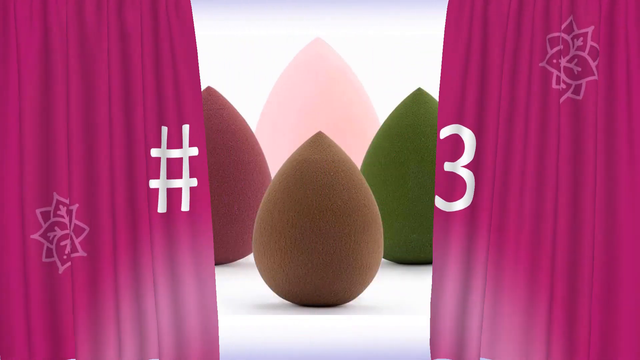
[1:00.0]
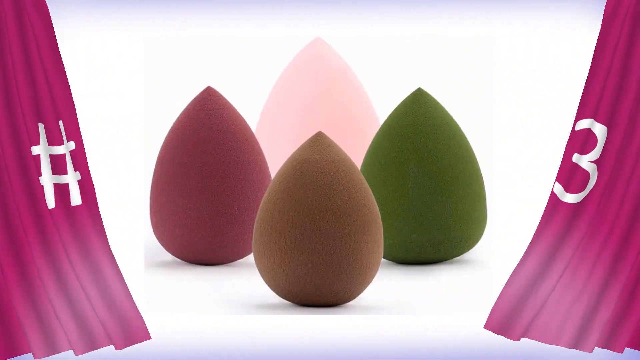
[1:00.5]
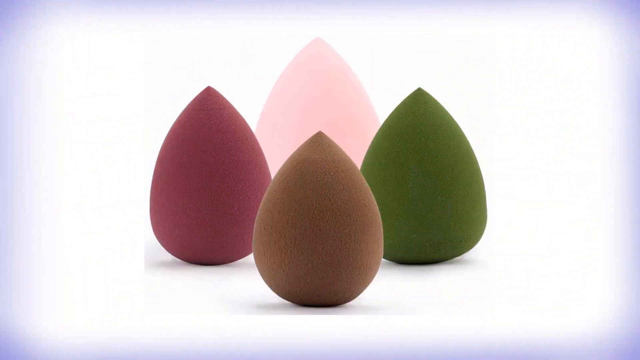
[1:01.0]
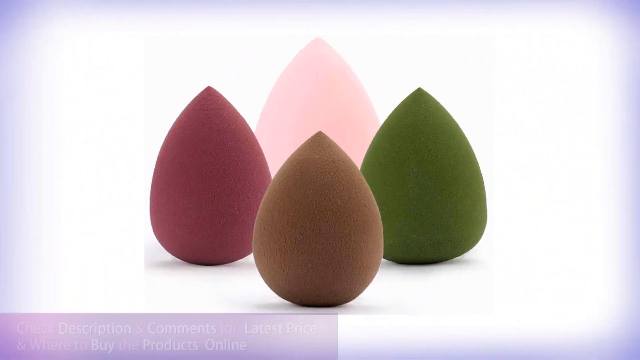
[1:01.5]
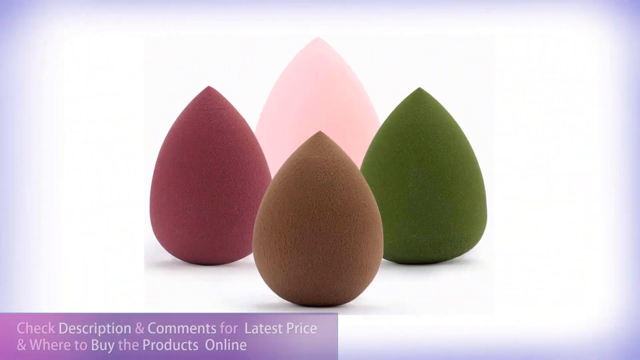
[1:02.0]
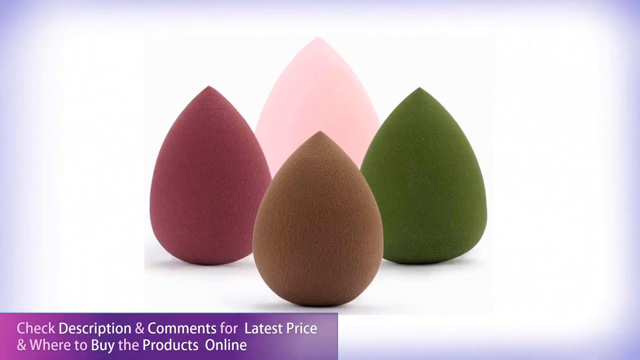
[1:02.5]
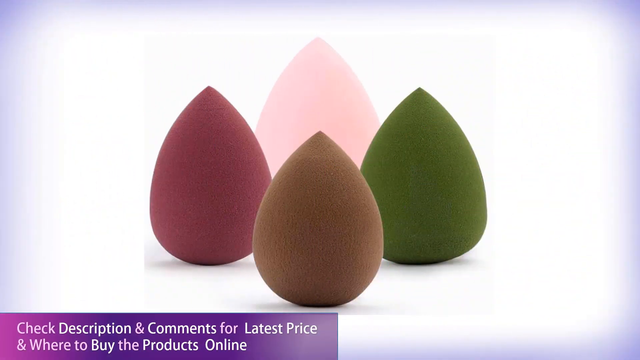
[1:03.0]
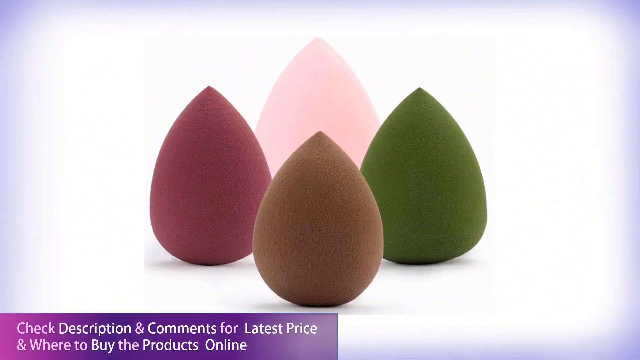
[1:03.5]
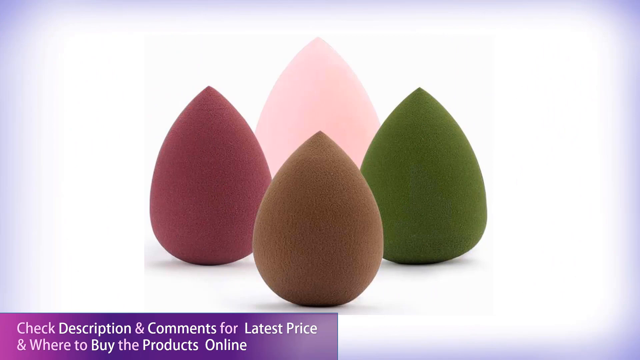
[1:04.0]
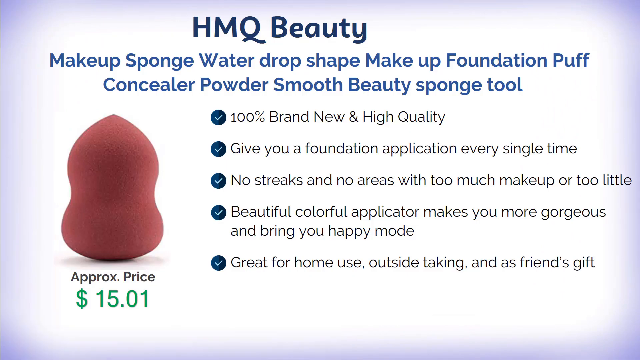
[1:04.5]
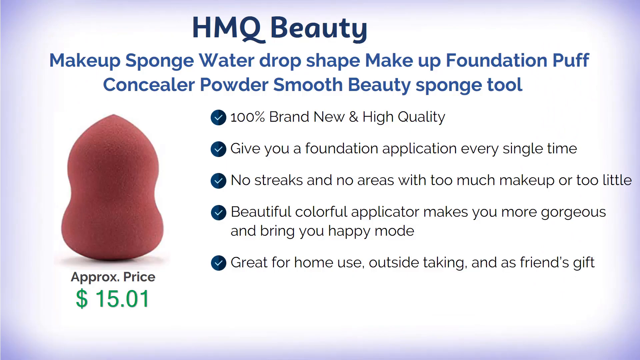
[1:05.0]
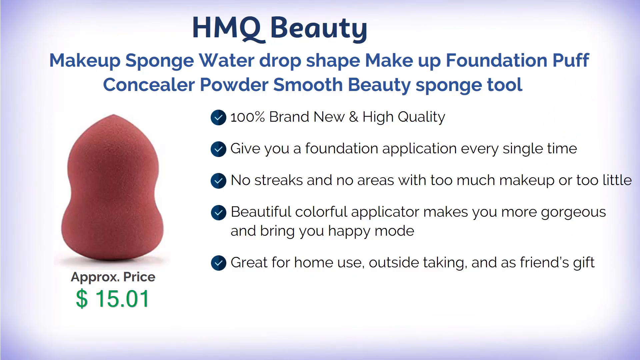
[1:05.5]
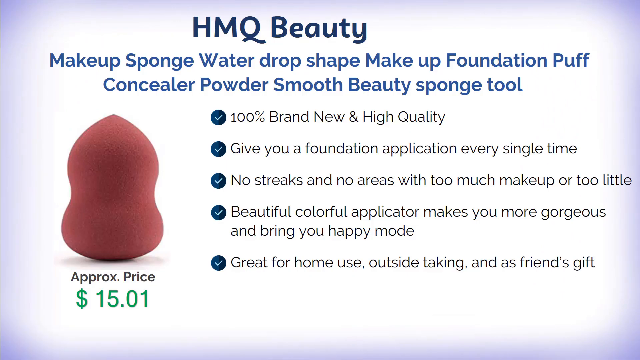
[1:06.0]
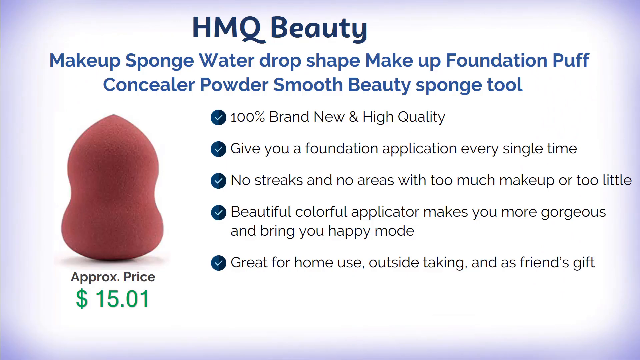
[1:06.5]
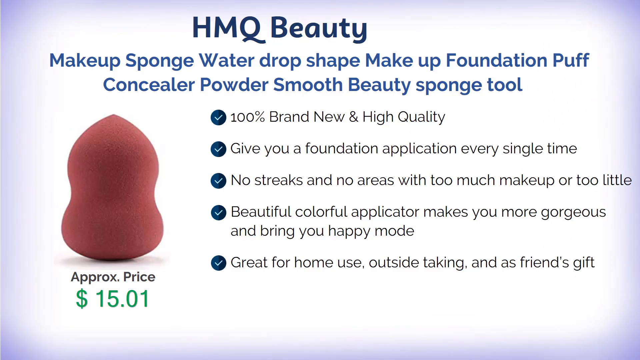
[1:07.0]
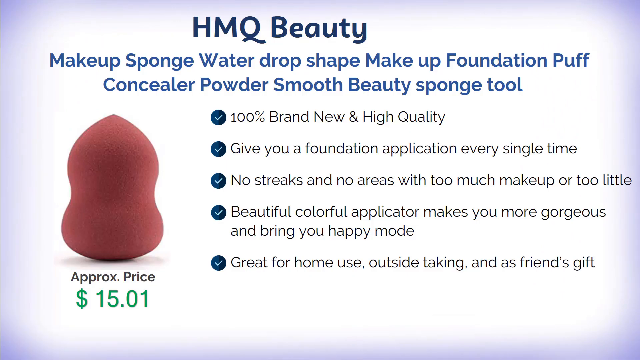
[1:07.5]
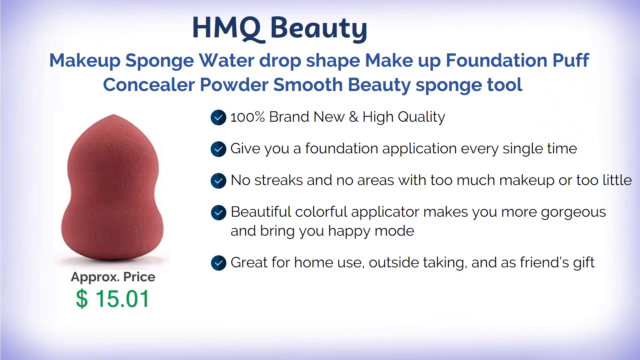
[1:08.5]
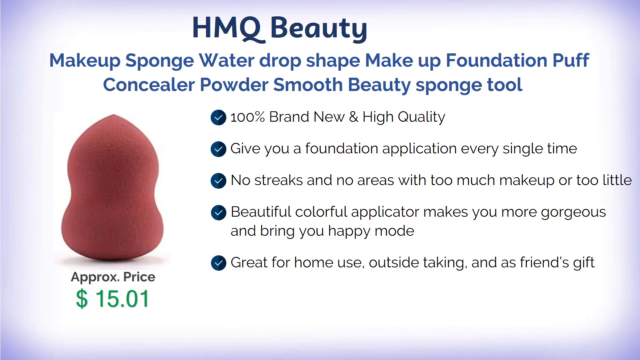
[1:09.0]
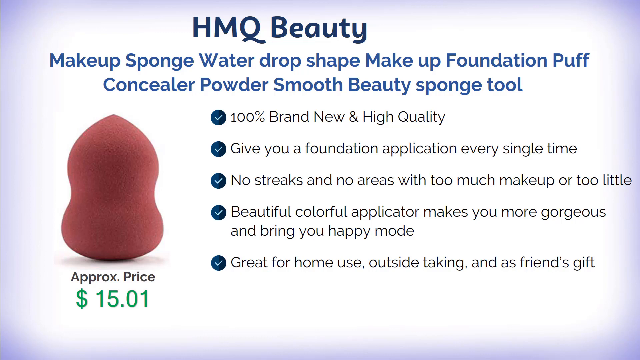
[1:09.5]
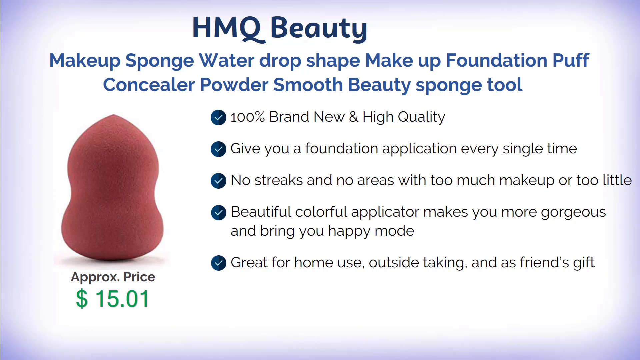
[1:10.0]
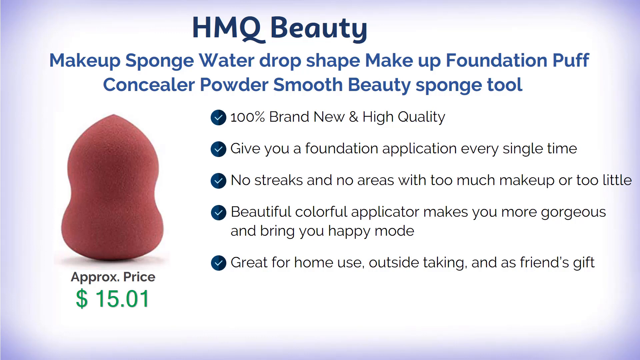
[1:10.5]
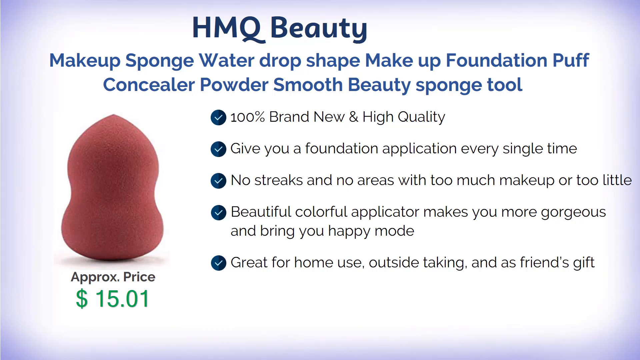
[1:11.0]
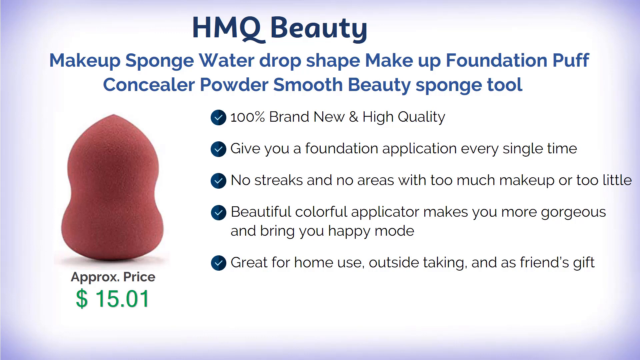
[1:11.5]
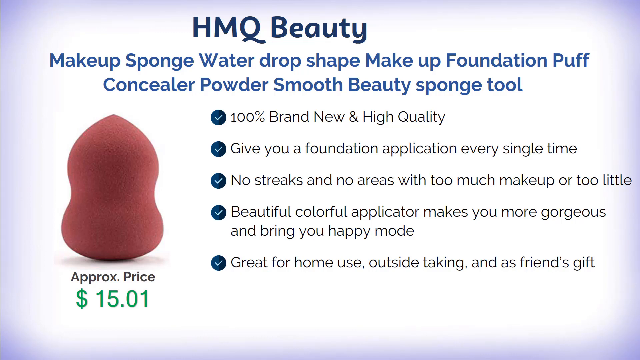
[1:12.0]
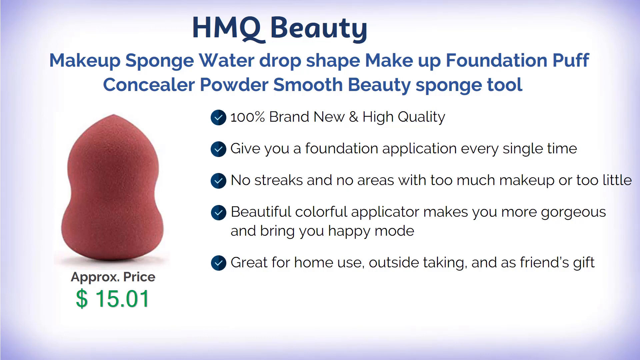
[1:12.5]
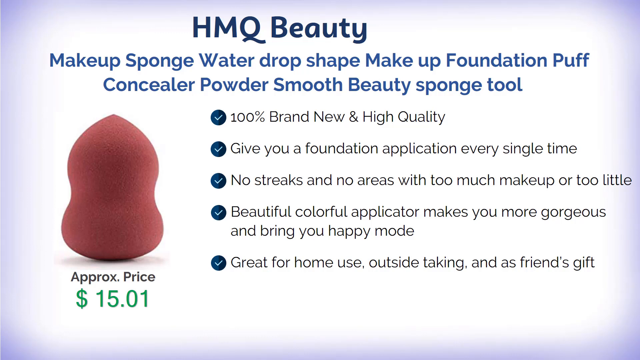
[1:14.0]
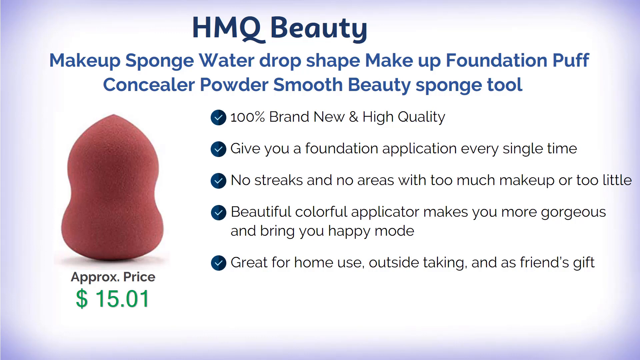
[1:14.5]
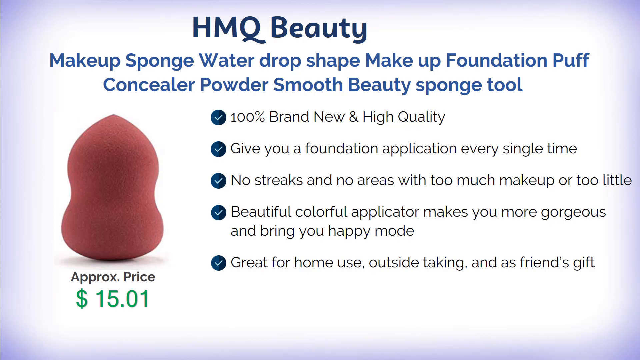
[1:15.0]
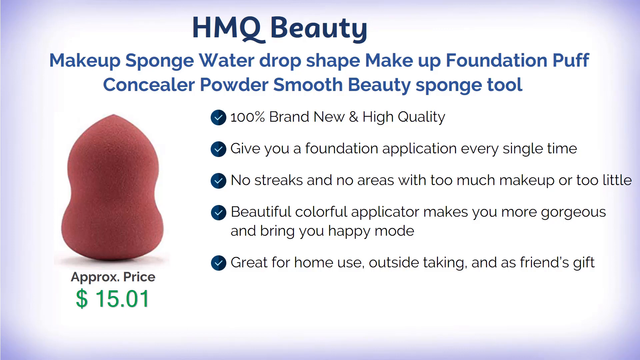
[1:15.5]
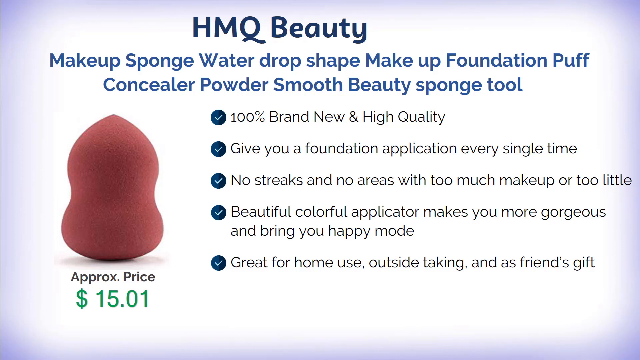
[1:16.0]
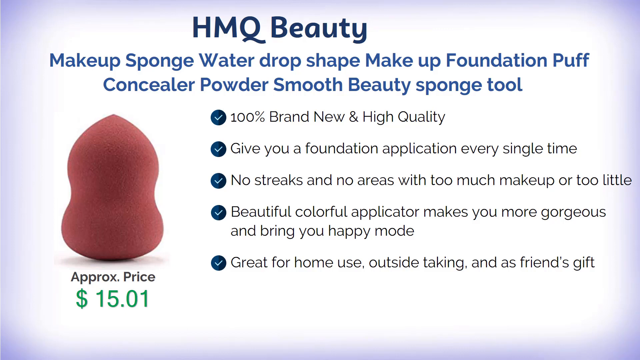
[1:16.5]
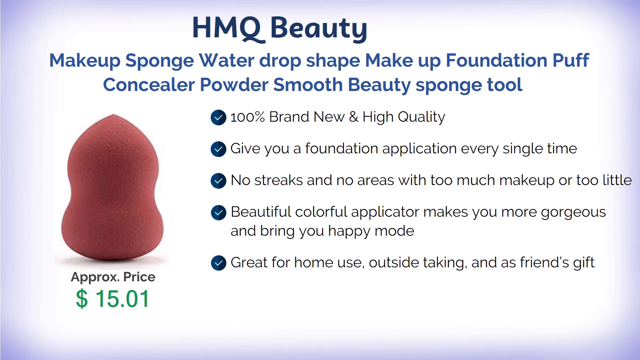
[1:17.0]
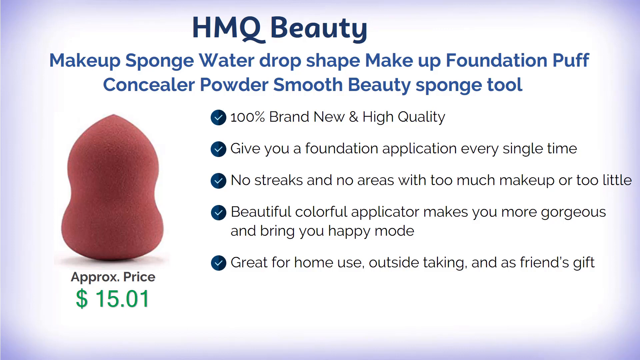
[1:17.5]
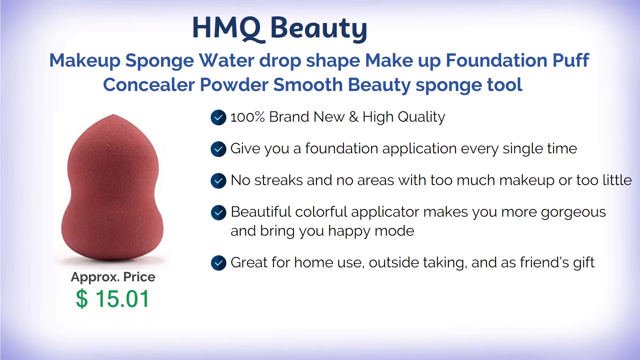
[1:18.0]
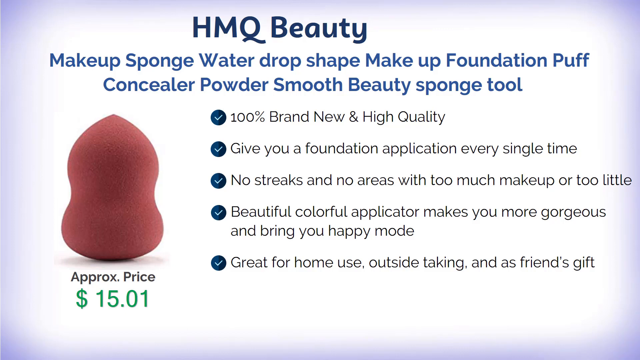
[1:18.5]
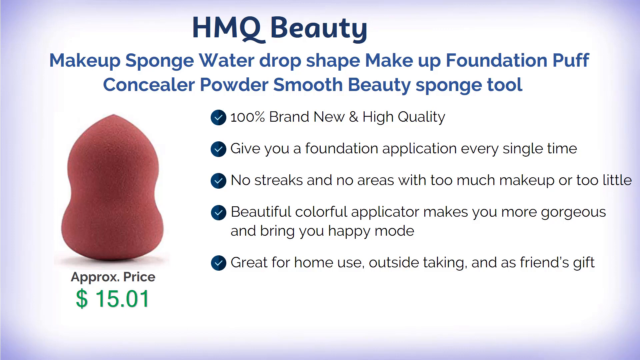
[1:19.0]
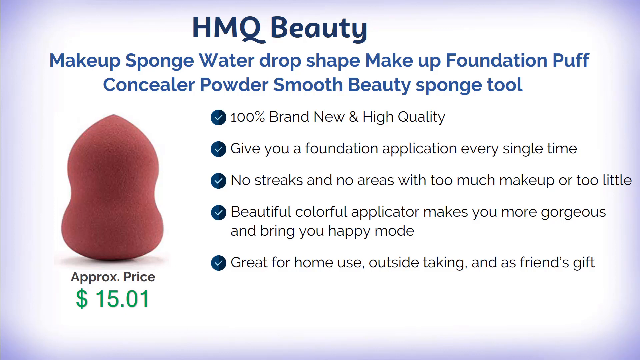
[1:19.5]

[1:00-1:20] Four teardrop-shaped objects appear against a white background: a burgundy-like one on the left, a kind of brown one in front to its right, a pink one directly behind that one, and a green one on the right of these. In the bottom left corner, a purple rectangle with white text reads "Check description and comments for latest price and where to buy the products online". The scene changes to a white background with lots of text. At the very top, dark blue text reads "HMQ Beauty". Below it, regular blue text reads "Makeup Sponge Water Drop Shape Makeup Foundation Puff Concealer Powder Smooth Beauty Sponge Tool". Below that, black text reads "100% brand new and high quality. Give you a foundation application every single time. No streaks and no areas with too much makeup or too little. Beautiful colorful applicator makes you more gorgeous and bring you happy mode. Great for home use, outside taking and as friends gift."